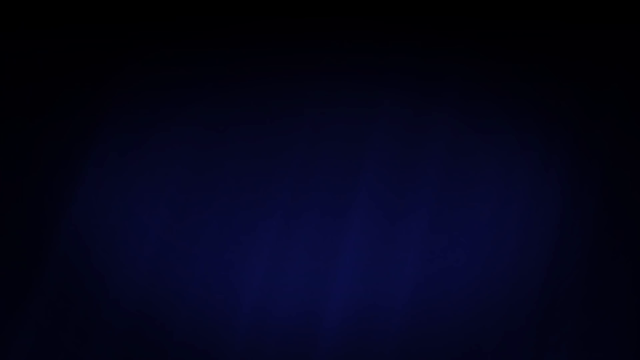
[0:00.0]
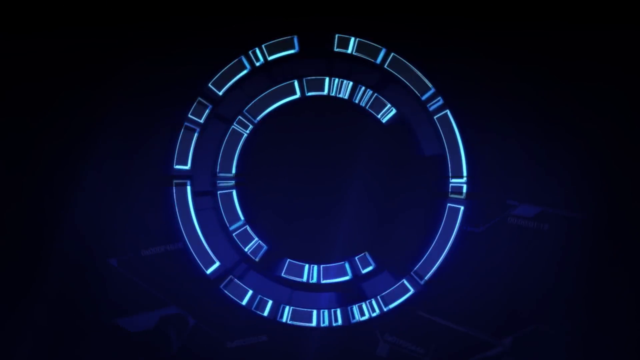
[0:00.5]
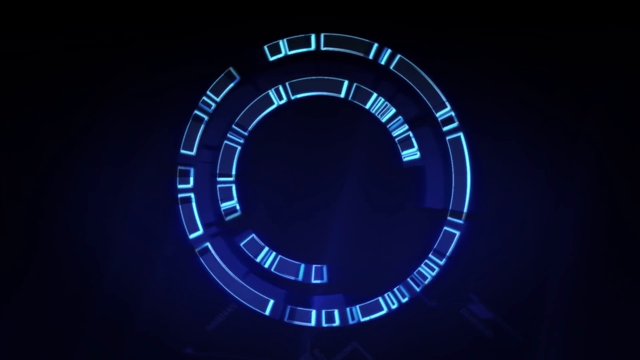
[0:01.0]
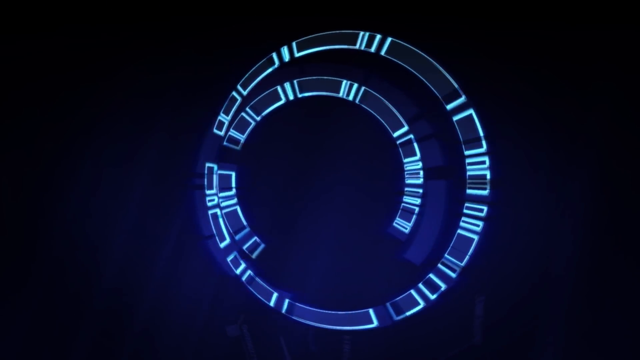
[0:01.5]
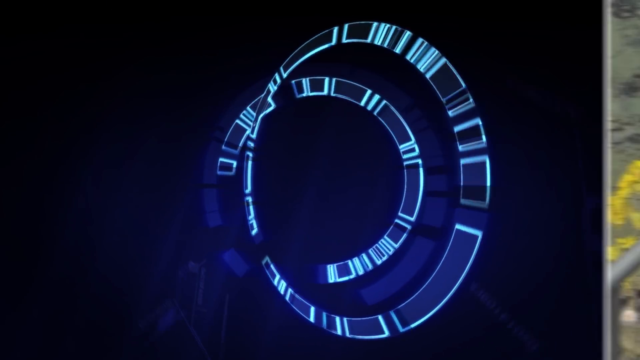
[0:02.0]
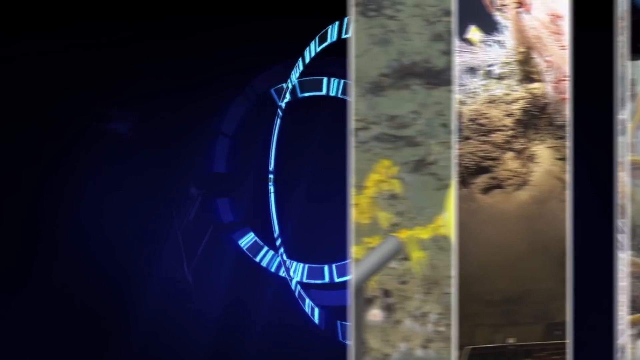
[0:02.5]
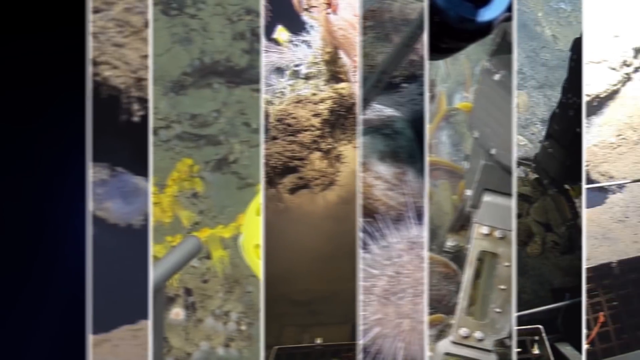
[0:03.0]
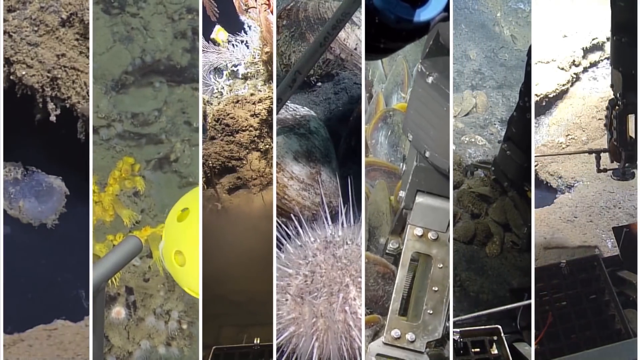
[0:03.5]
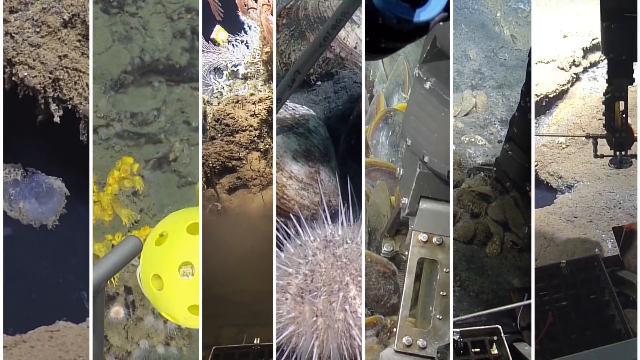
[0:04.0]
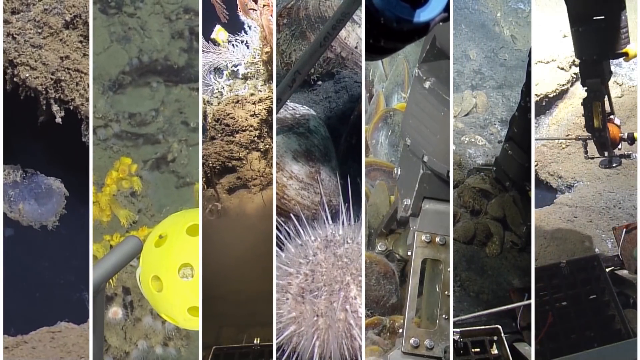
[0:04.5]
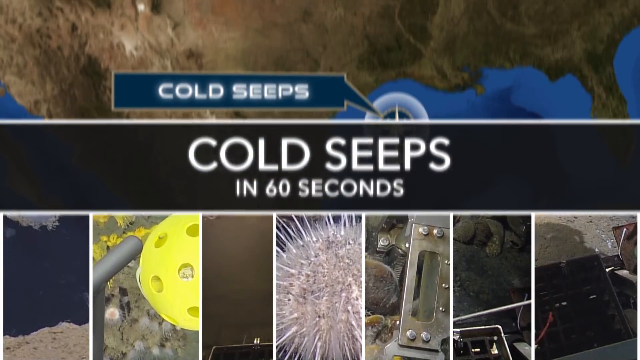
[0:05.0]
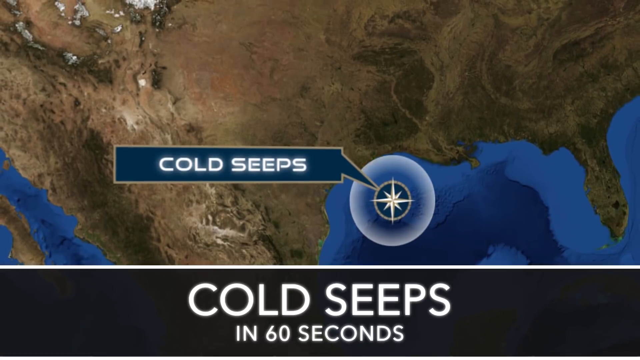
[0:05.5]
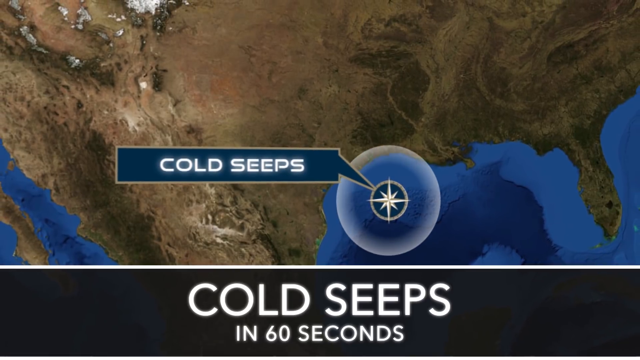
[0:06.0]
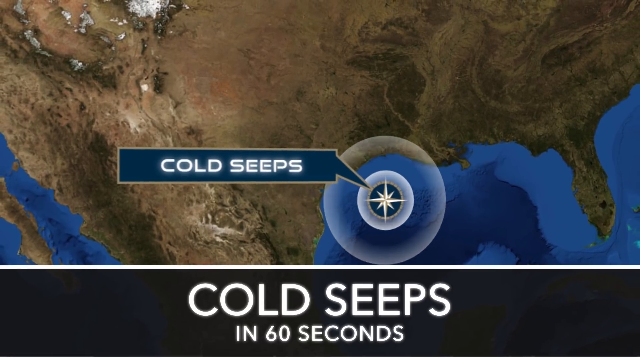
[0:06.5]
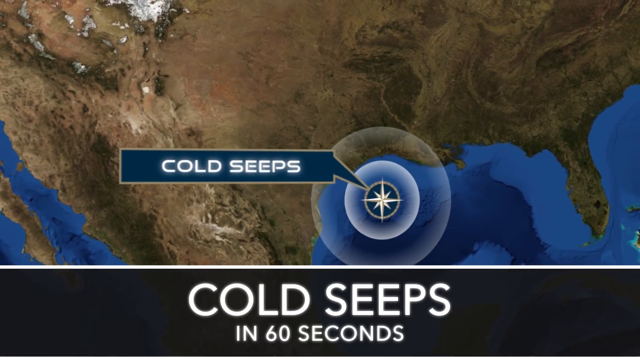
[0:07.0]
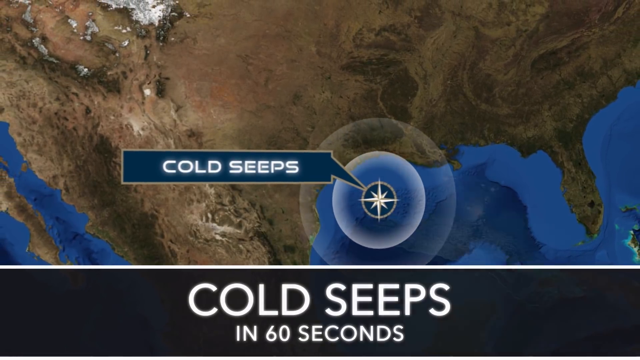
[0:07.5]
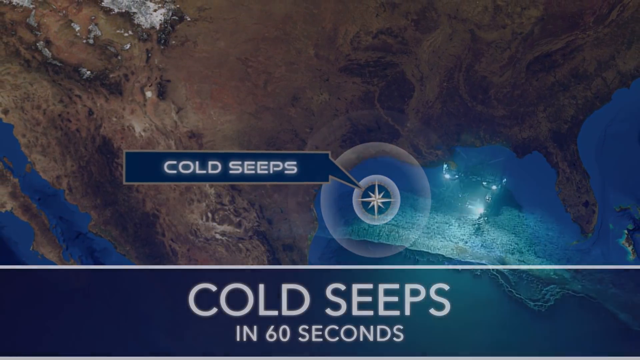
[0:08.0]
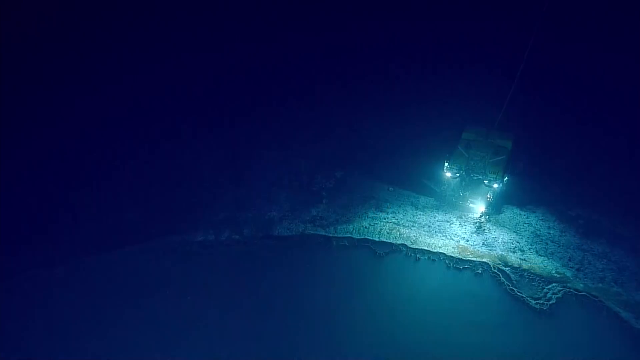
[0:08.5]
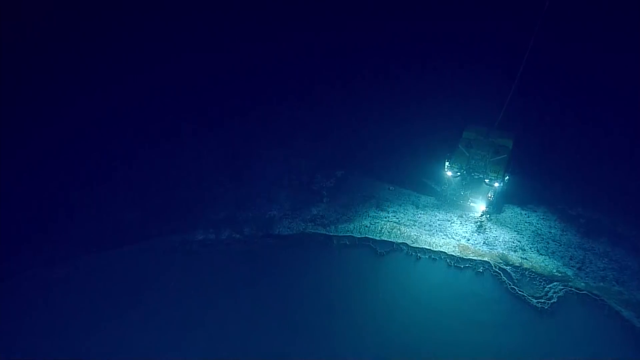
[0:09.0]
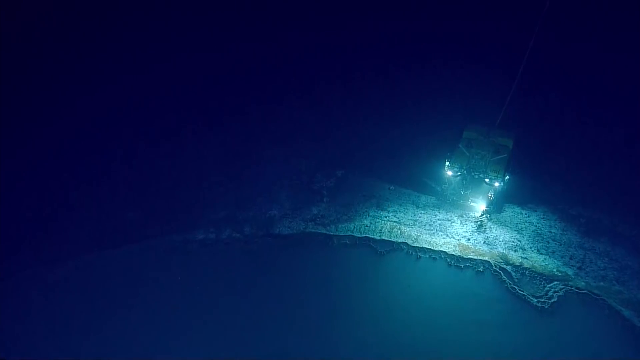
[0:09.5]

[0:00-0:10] The video opens with two concentric circles. The outer circle is made up of a number of arced rectangles and spins counterclockwise. The inner circle is made of the same rectangular shapes but is missing about one-fourth, so it looks like the letter C; it spins clockwise. Several photographs then swipe across the screen from the right side. Text comes down from the top of the screen to the bottom in white capital letters, reading "Cold Seeps." A map of the United States appears with an arrow pointing to the Gulf of Mexico, along with the text "Cold Seeps."